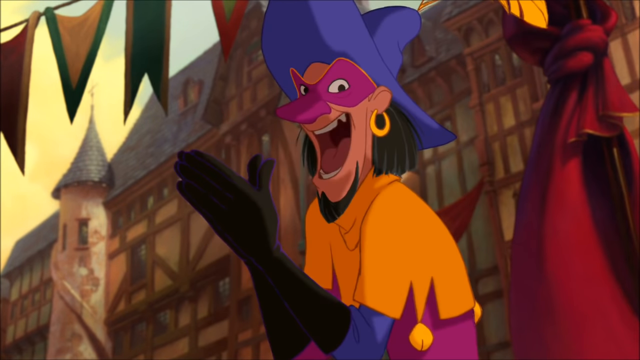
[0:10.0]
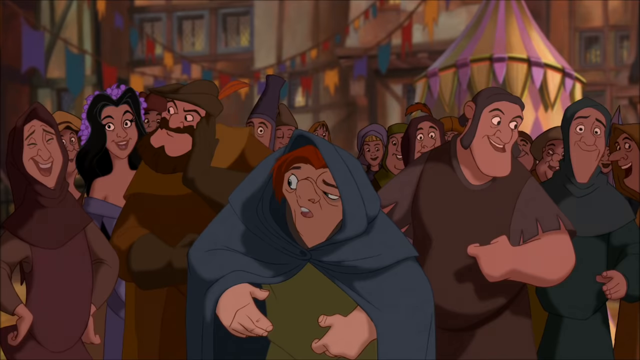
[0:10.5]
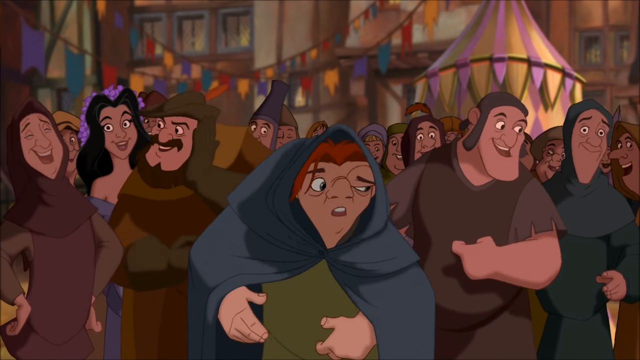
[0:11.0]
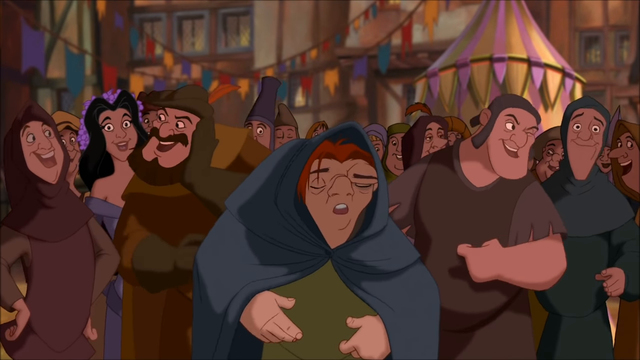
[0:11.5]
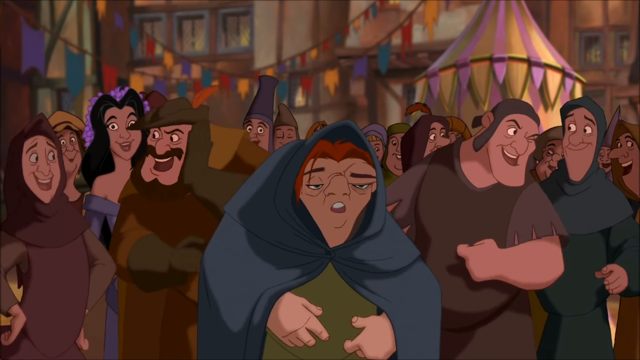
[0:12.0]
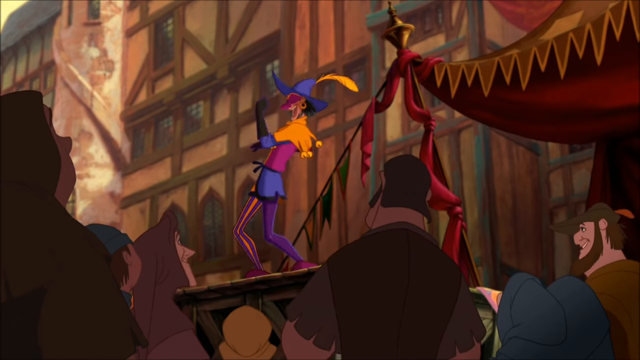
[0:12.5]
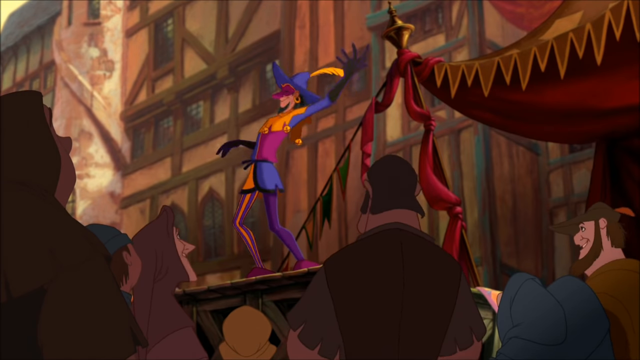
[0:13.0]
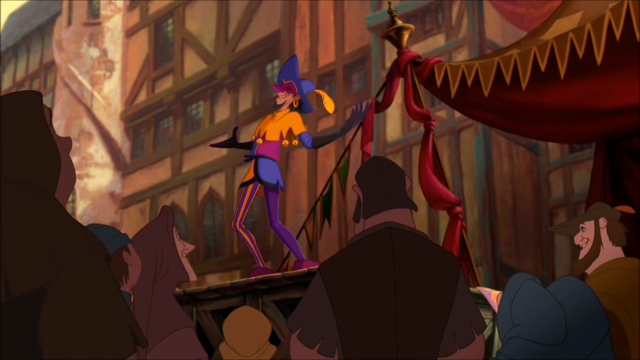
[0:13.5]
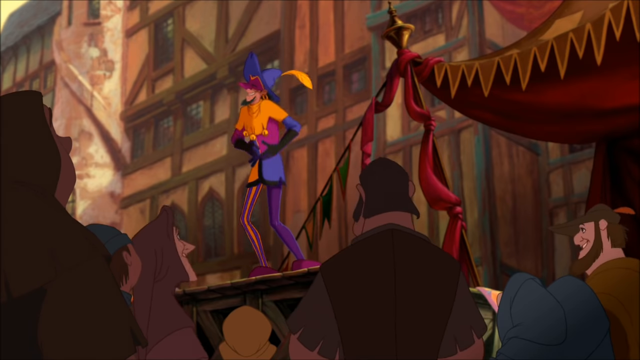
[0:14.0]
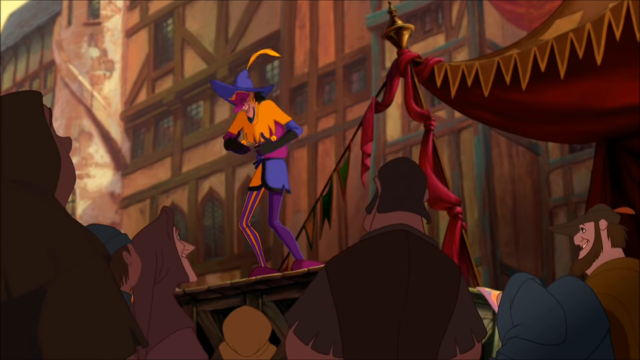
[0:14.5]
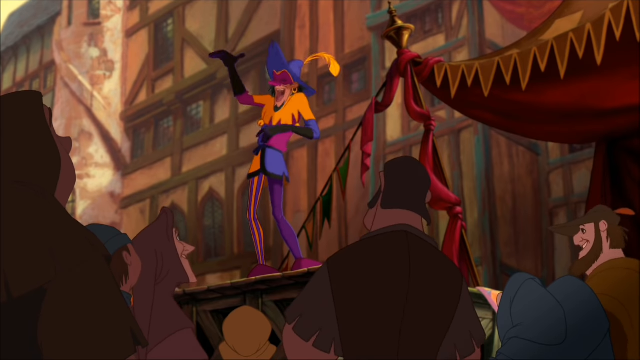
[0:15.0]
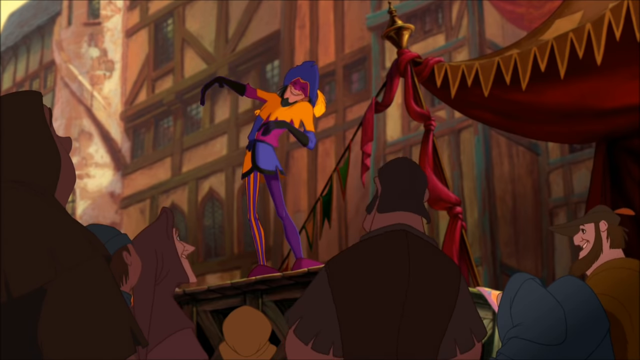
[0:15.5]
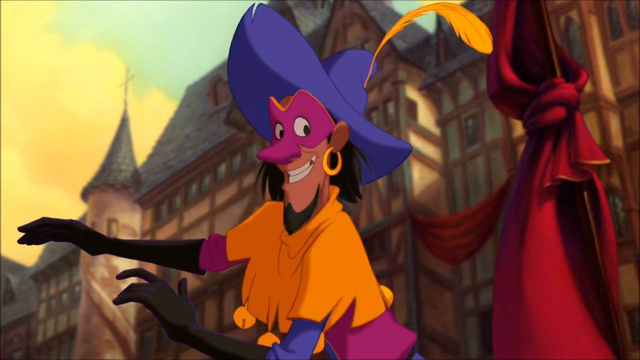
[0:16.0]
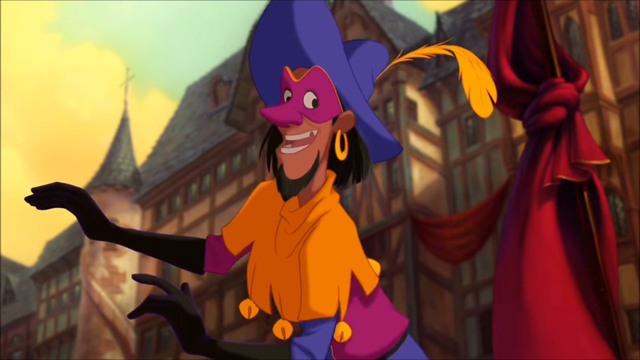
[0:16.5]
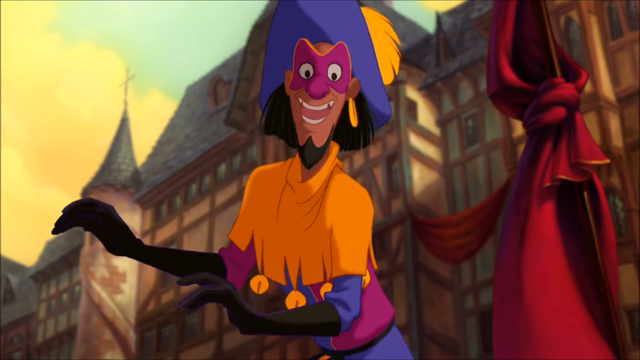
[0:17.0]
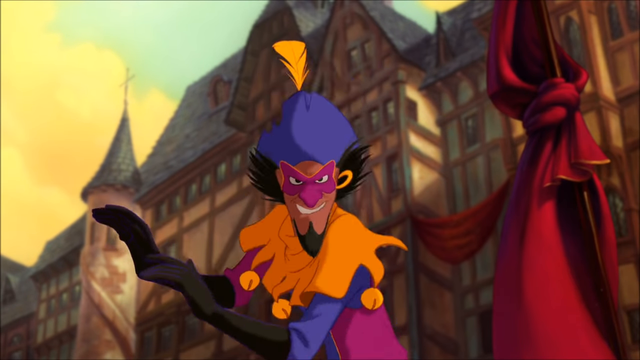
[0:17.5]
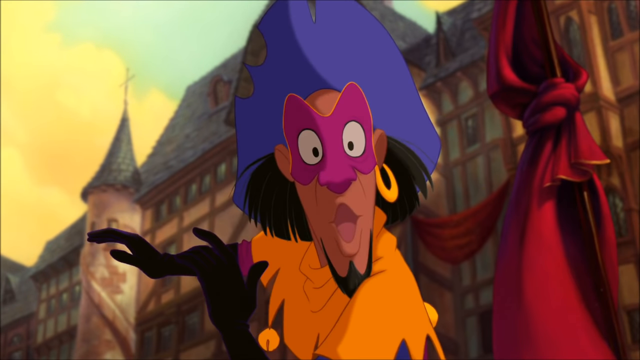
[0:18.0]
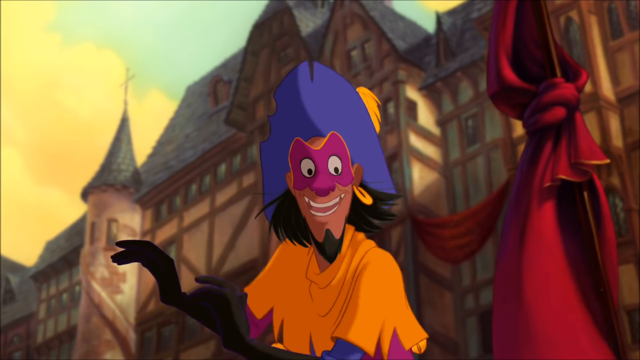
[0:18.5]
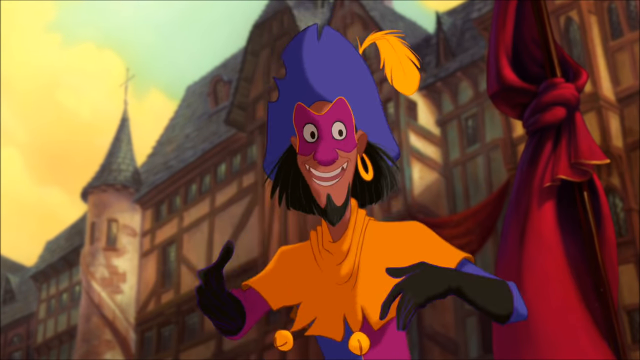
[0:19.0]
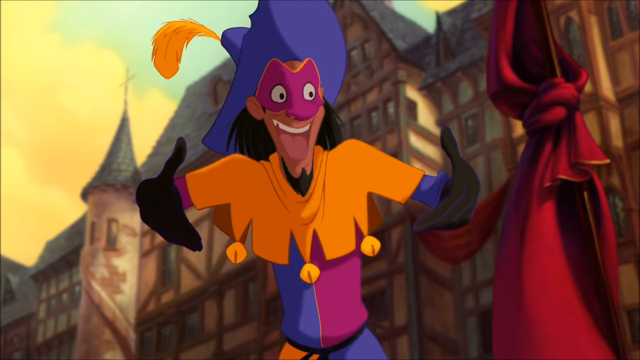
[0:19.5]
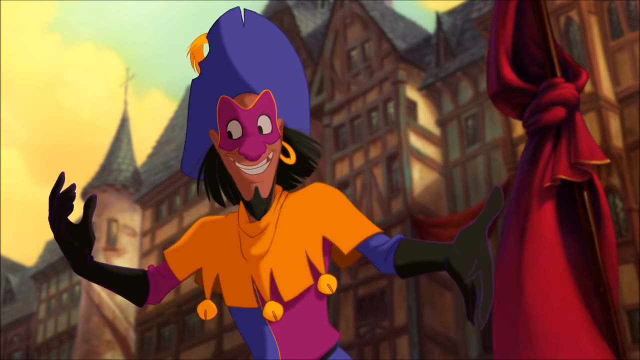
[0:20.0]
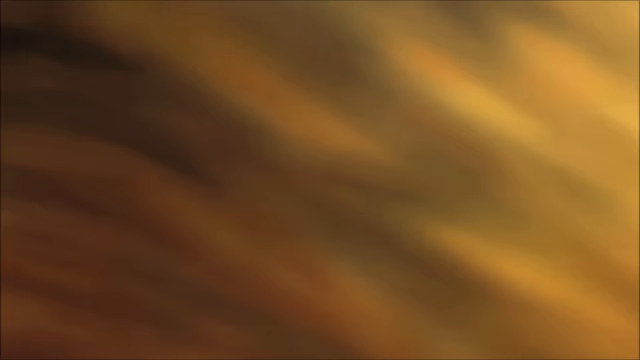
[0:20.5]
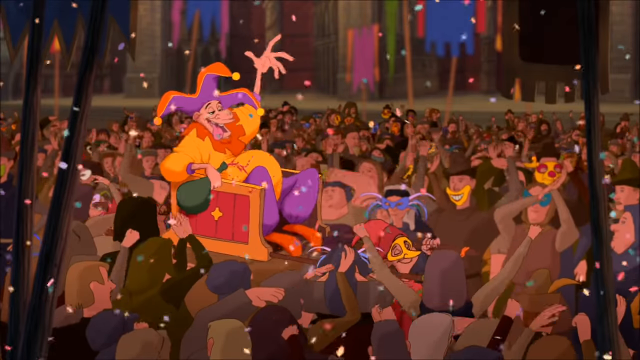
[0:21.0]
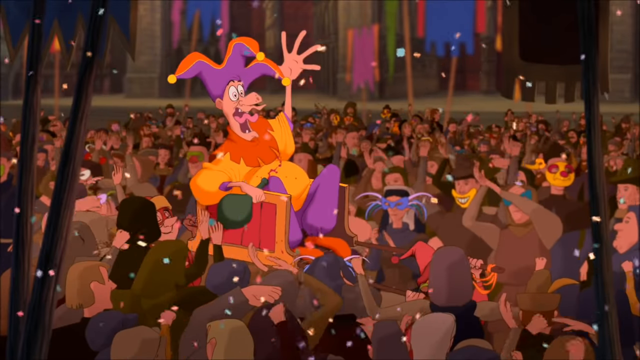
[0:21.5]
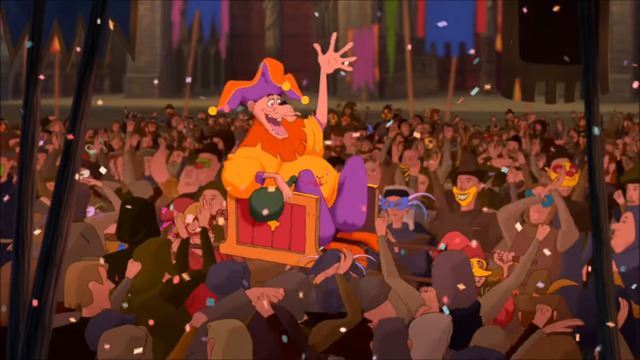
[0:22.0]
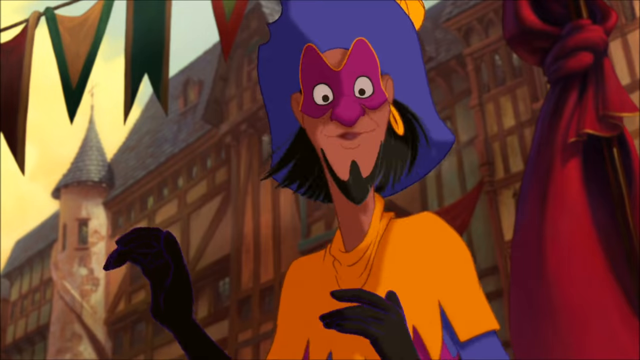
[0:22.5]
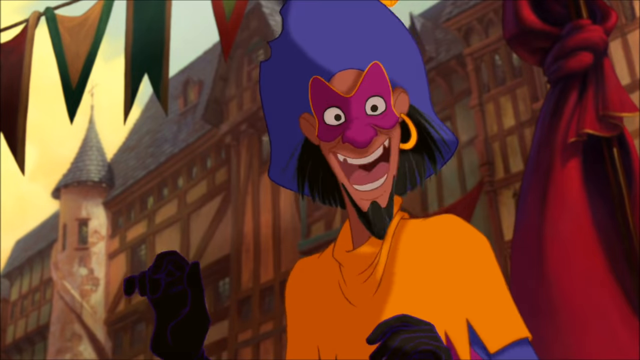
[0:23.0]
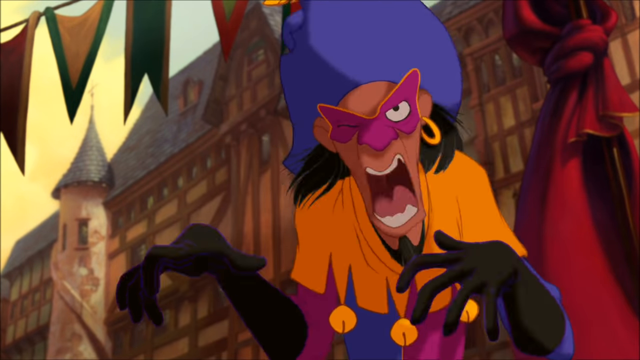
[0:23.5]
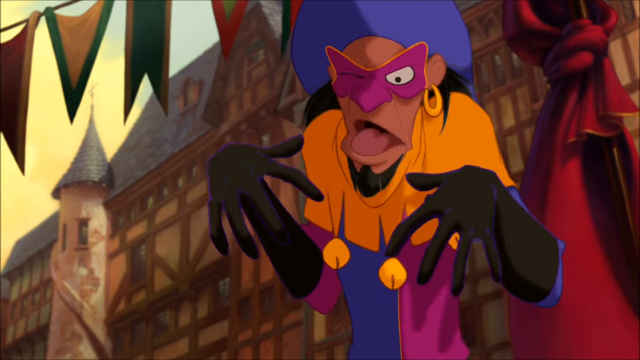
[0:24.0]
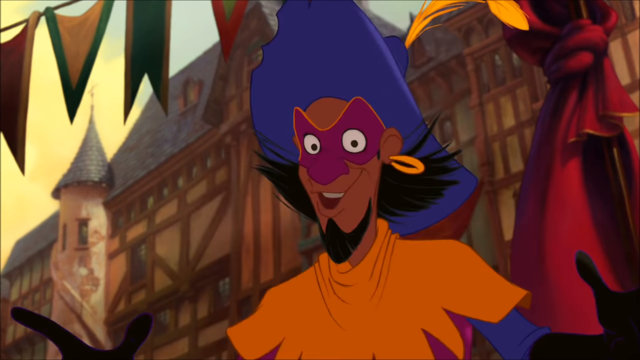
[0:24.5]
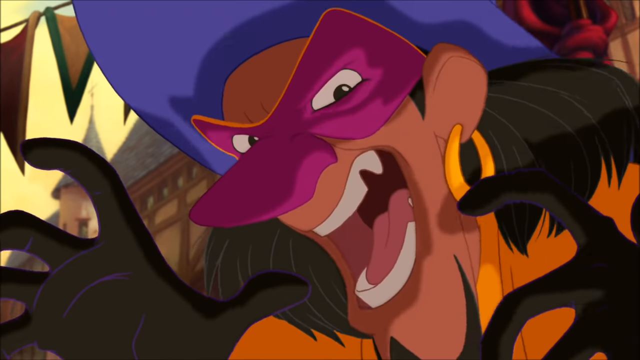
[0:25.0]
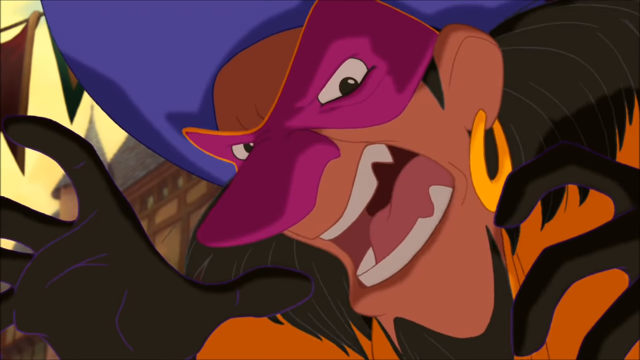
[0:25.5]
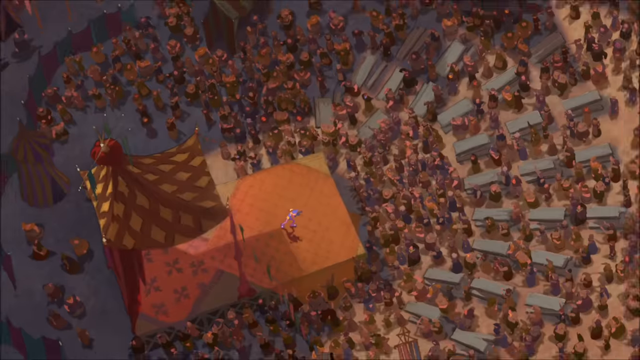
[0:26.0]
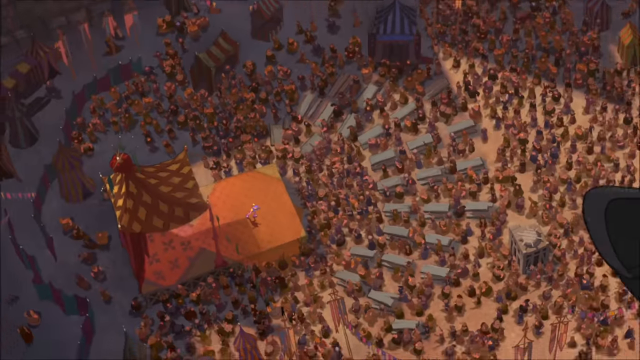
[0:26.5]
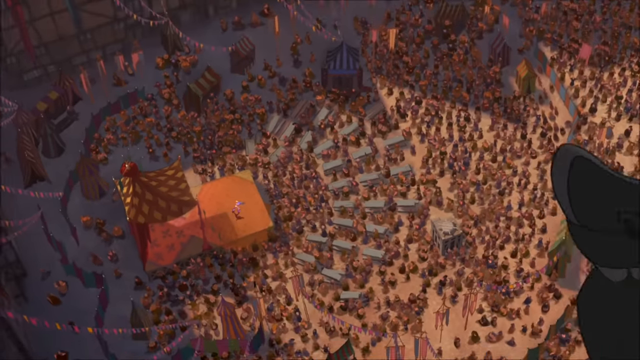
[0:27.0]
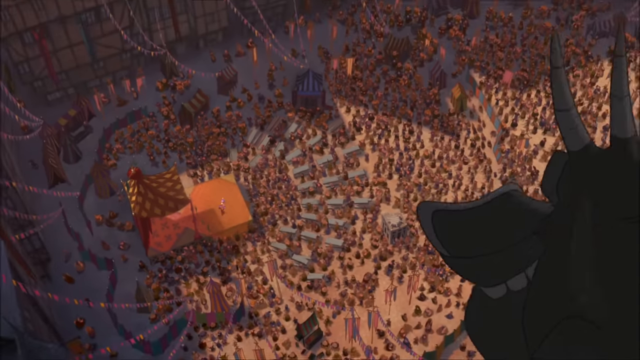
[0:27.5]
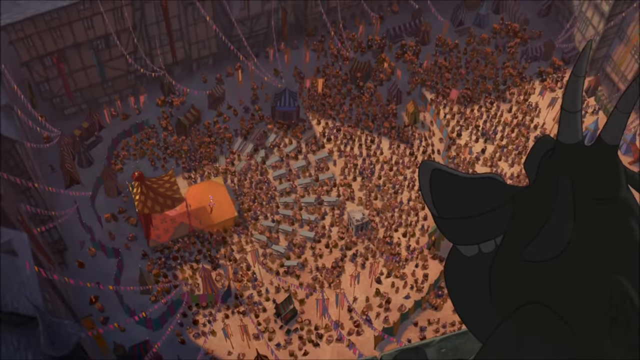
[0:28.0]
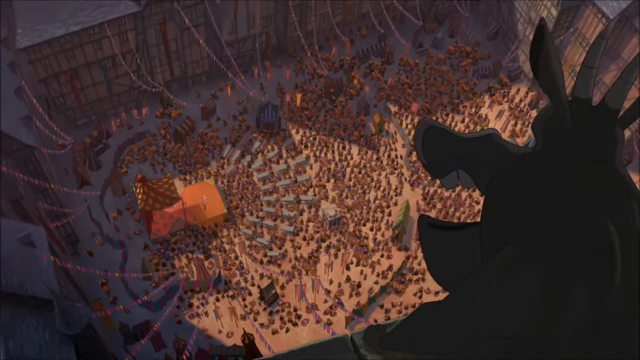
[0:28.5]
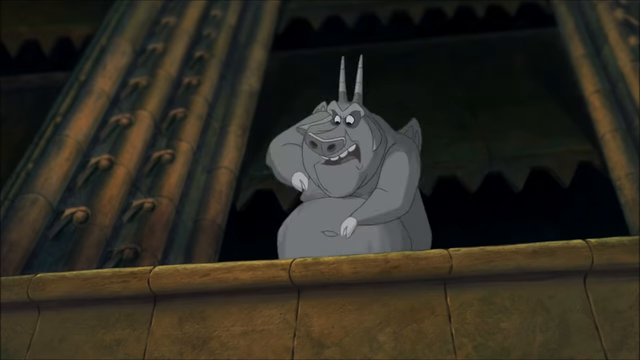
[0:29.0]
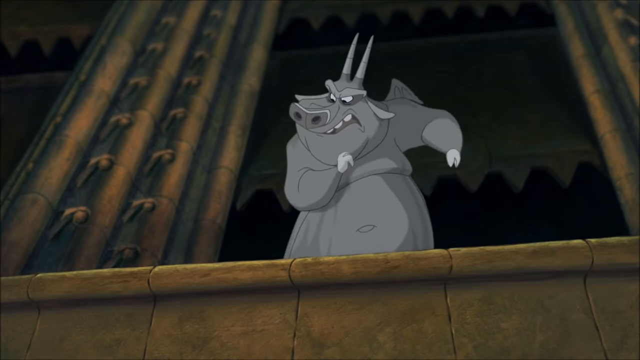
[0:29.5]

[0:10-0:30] The jester on the stage gesticulates wildly, speaking aloud, and looks somewhat toward the camera. The scene switches to the cheering crowd, in which a man, possibly the king of fools, sits on a chair that is passed overhead by the people in the crowd toward the stage. The jester makes a kind of evil look, as if he is going to do something bad to this person or is saying something about him. The point of view shifts to quite a bit above the scene and then pulls away, showing just the top of the tent and the crowd arrayed in the square. Very briefly, what appears to be a cartoon gray dog stands on a balcony, also speaking. The scene cuts back and forth between faces in the crowd and different shots of the jester on the stage, who laughs, gestures wildly and makes a big face at people.